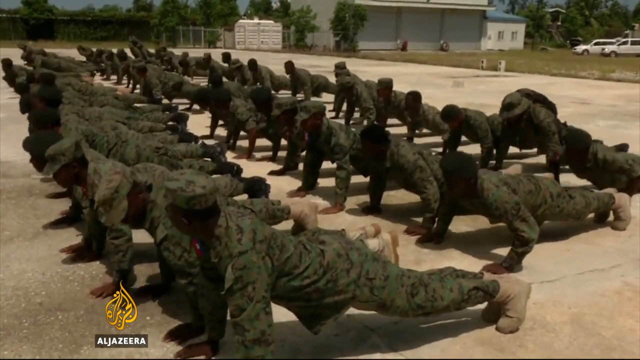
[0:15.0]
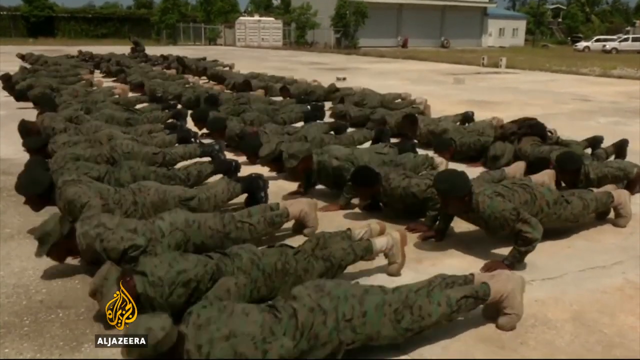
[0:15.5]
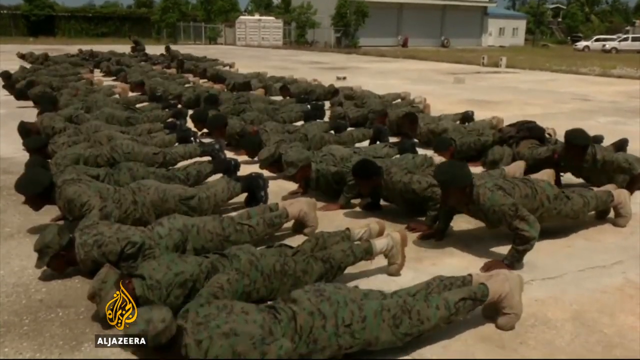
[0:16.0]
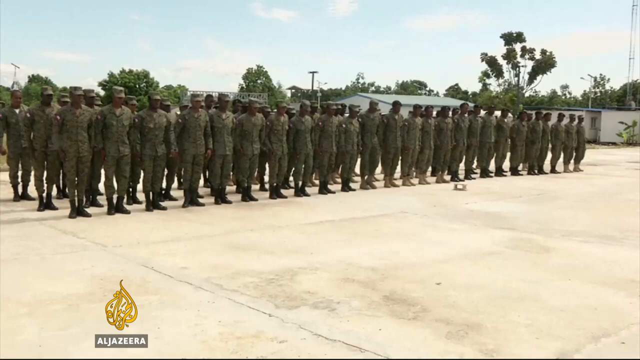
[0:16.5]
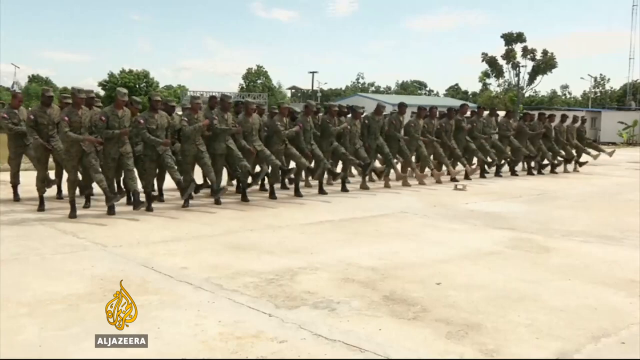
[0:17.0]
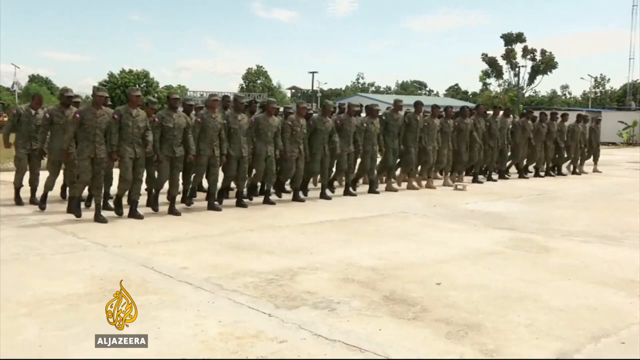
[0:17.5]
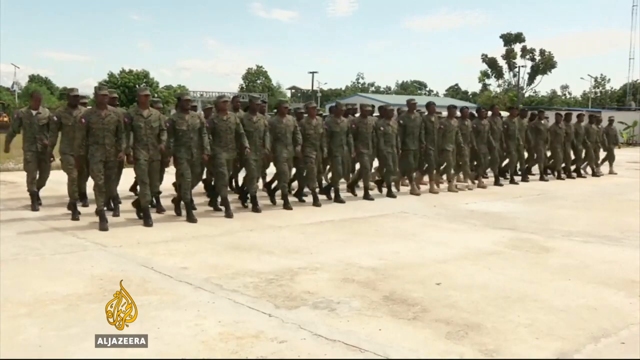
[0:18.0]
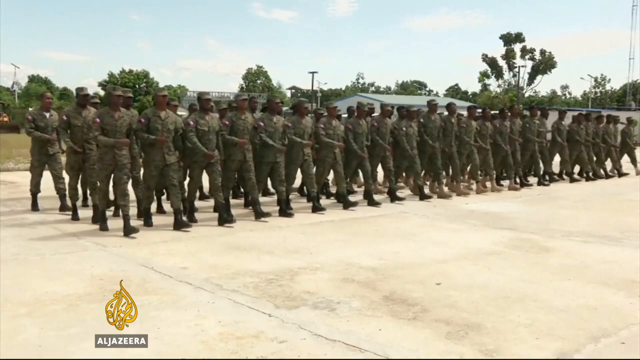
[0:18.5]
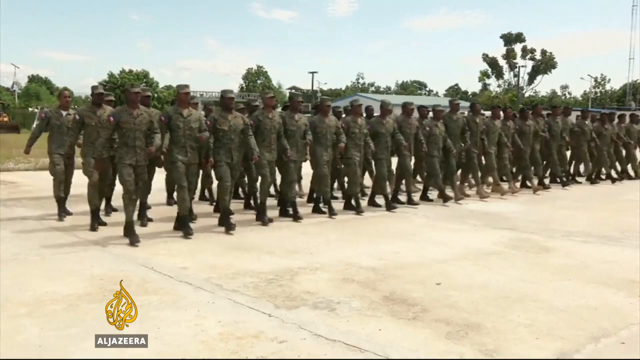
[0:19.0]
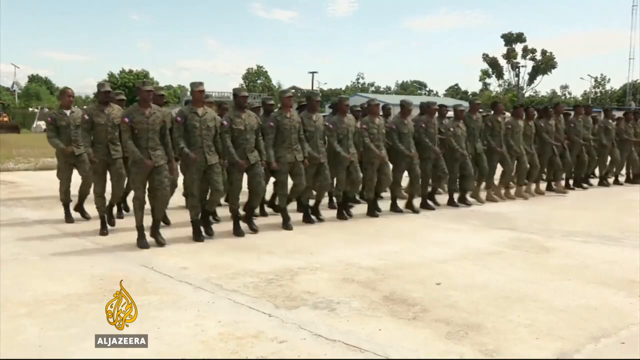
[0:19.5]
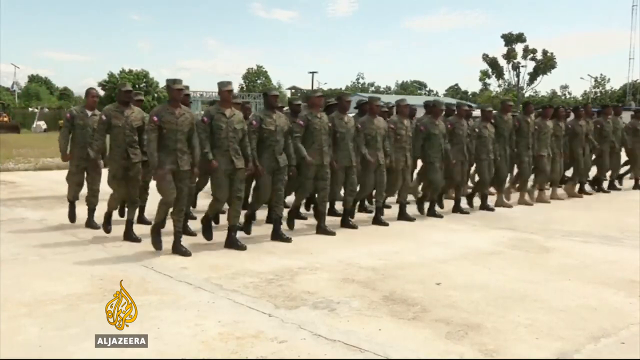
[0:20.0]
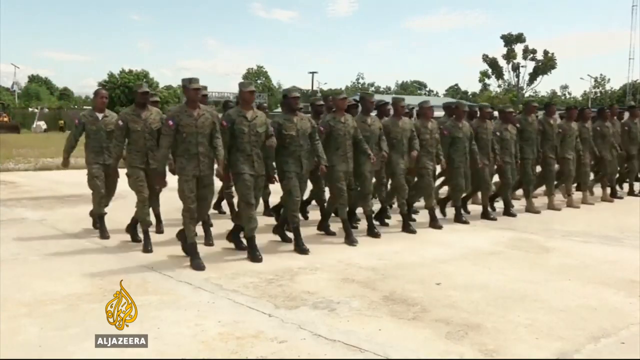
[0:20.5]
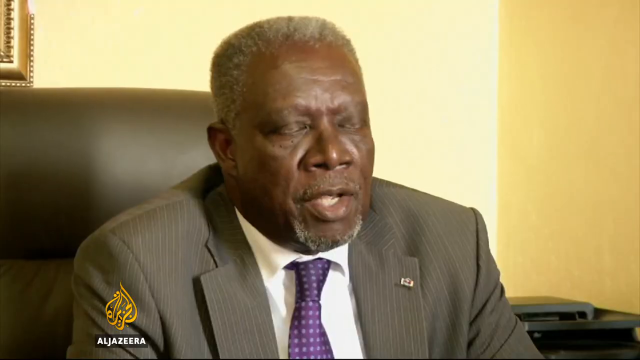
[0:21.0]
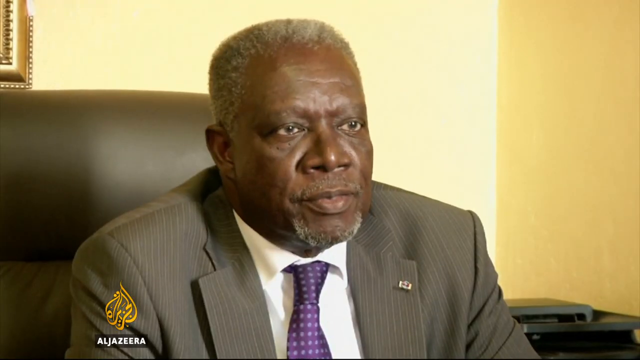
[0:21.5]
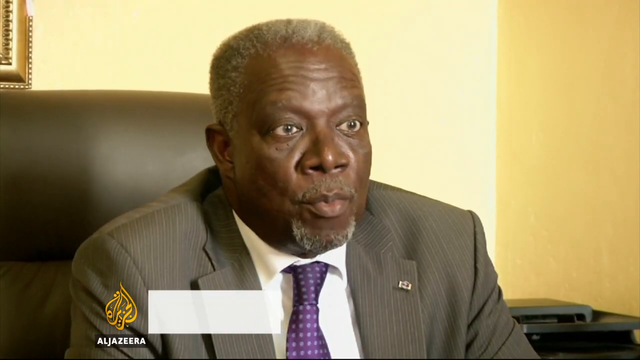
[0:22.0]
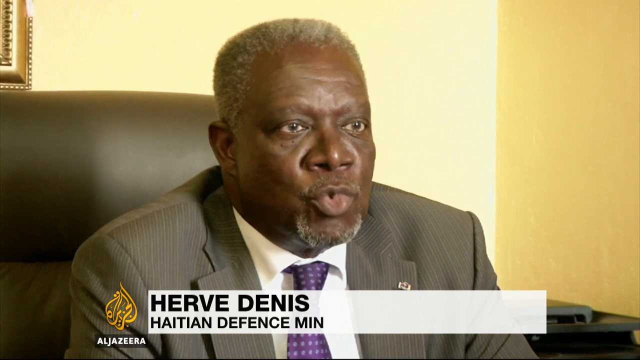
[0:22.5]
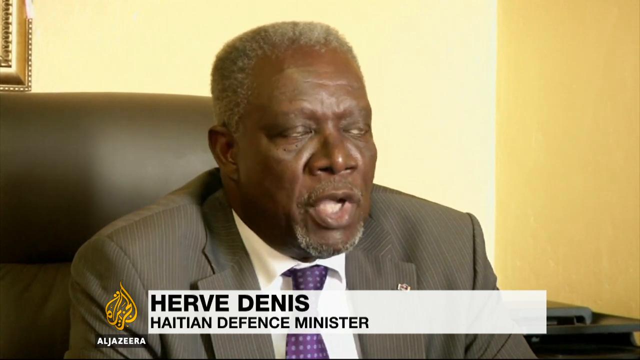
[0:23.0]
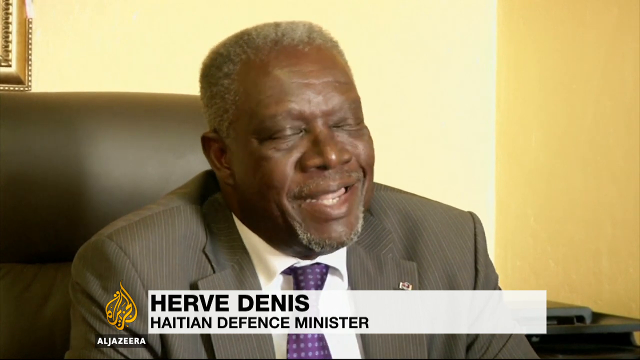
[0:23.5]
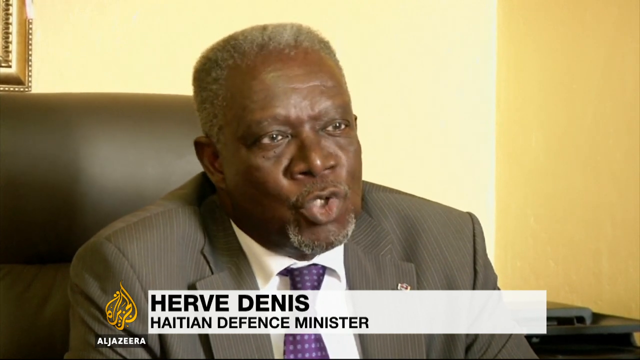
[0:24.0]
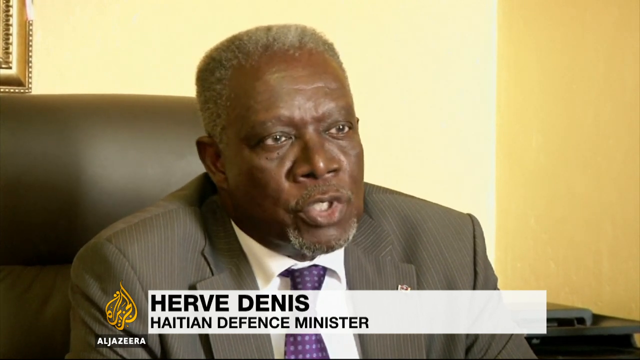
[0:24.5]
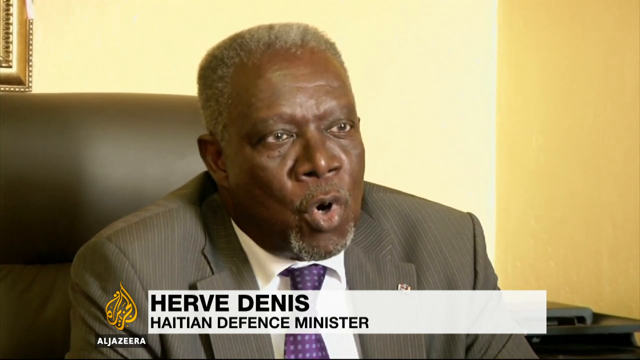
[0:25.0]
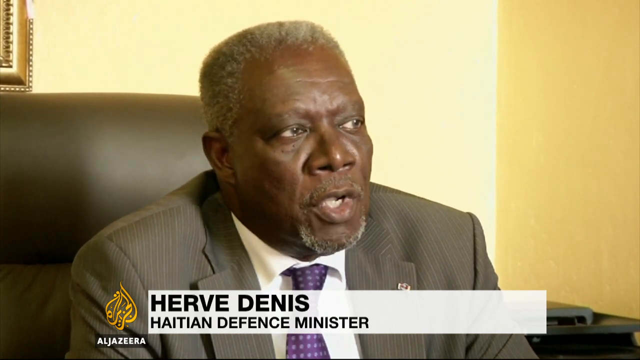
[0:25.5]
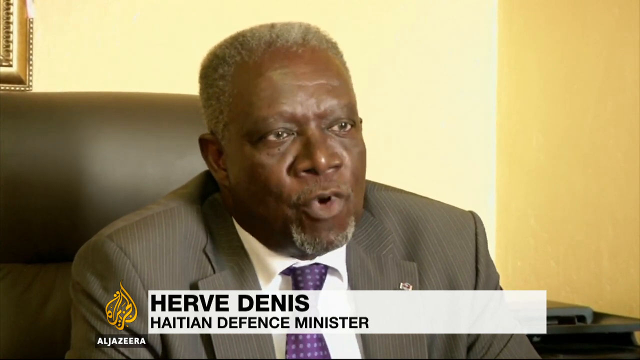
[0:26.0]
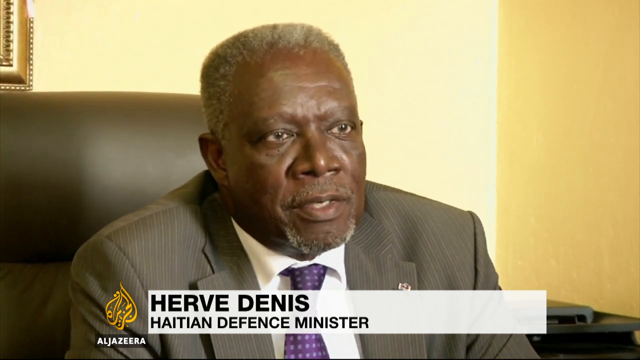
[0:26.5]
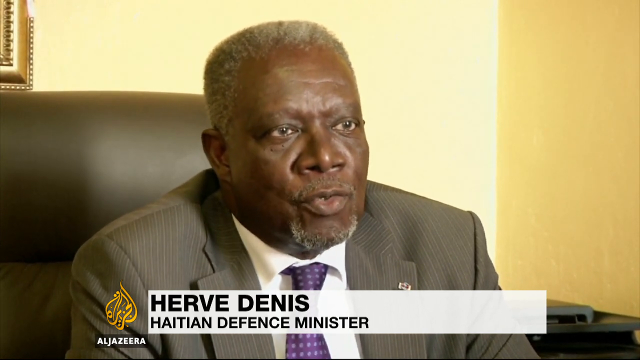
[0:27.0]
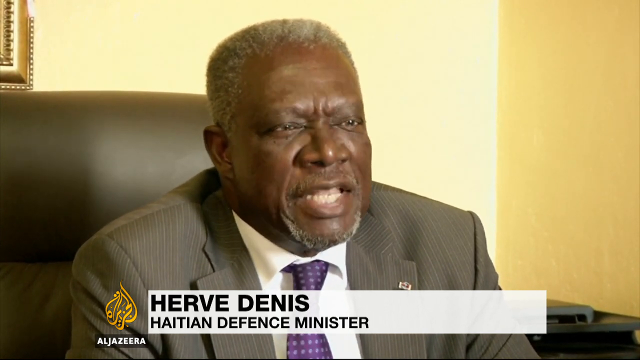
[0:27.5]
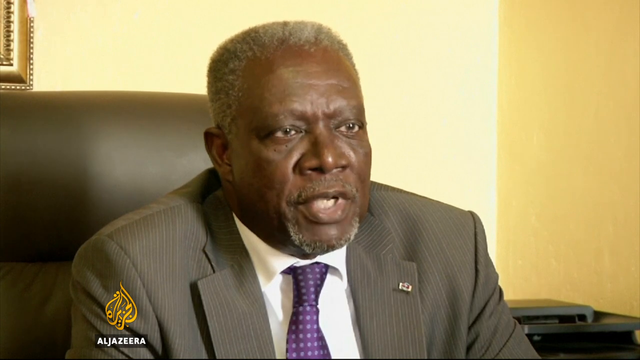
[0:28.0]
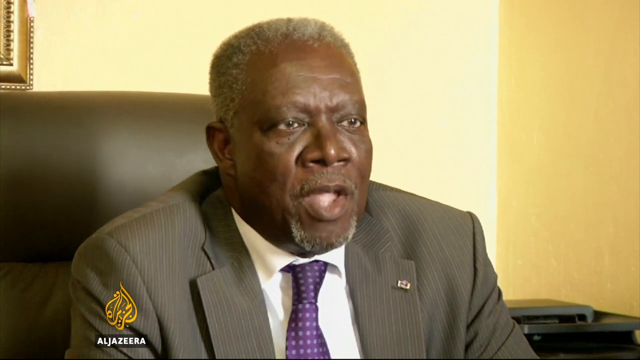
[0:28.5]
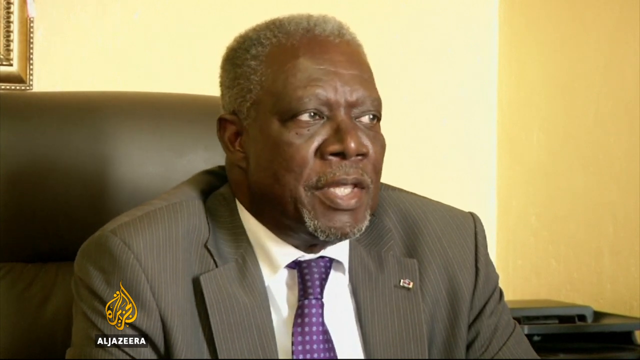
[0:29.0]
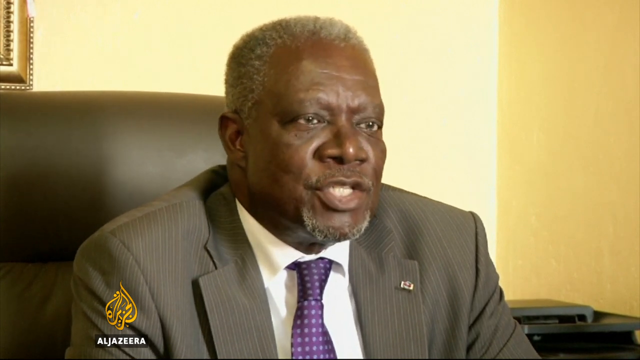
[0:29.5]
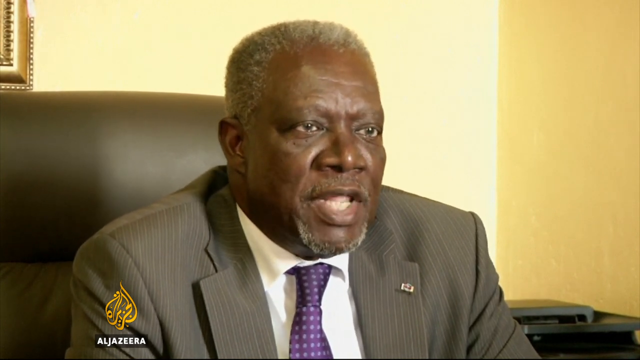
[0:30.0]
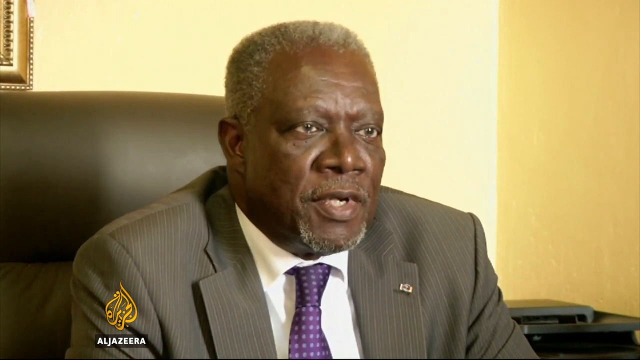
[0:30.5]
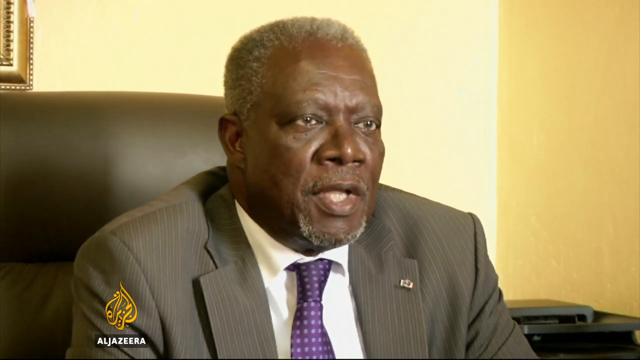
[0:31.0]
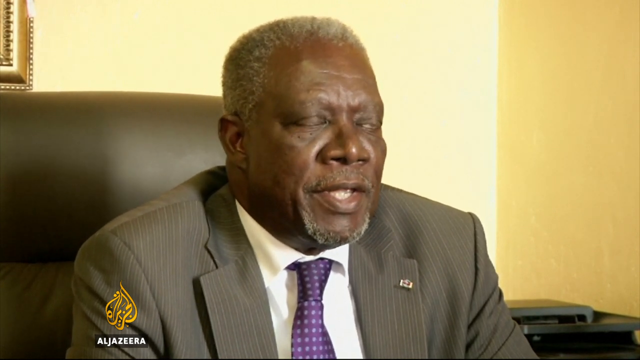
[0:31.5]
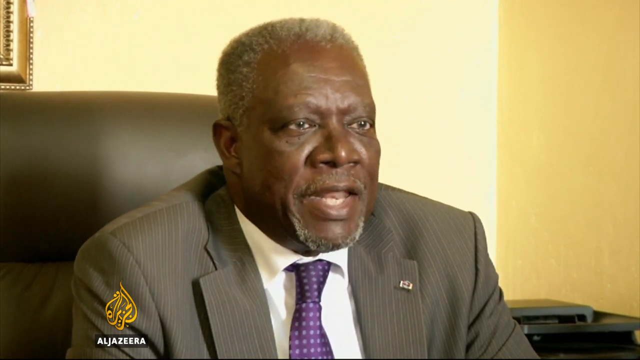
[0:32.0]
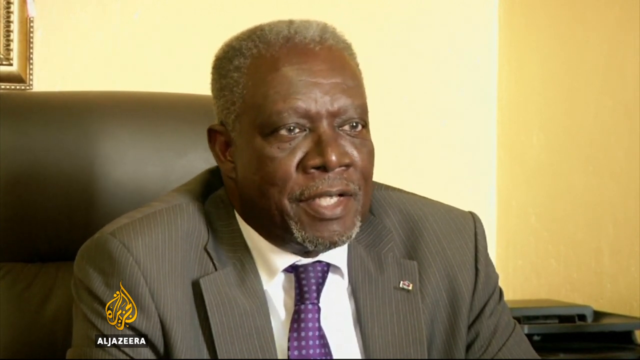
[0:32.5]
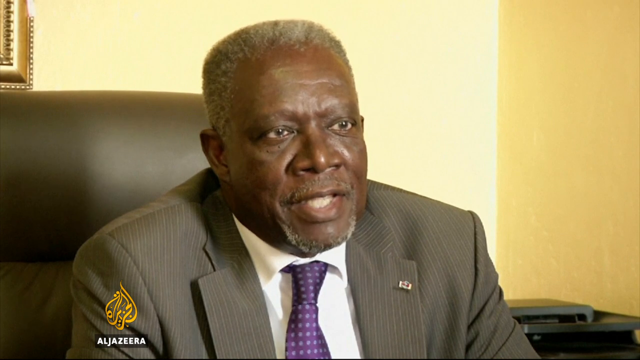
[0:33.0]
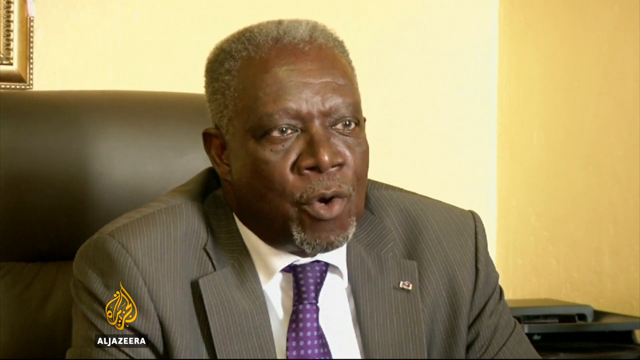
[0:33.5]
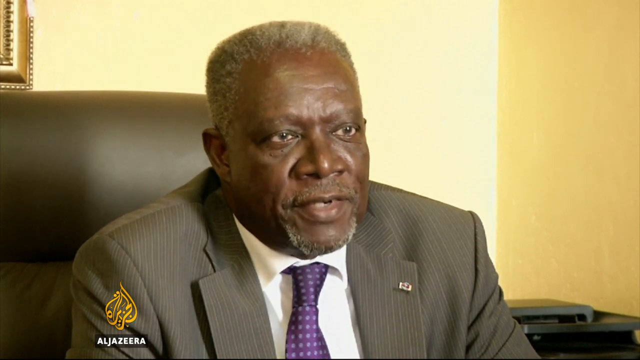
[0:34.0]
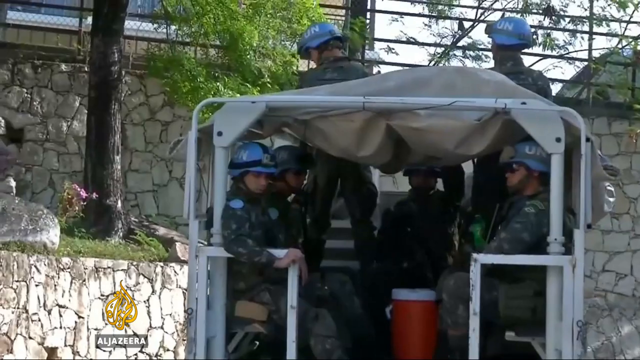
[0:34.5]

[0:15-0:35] The Haitian army is shown doing drills, marching in unison in their army fatigues, and doing push-ups. The defense minister, whose name is Herve Dennis or Denise, is interviewed as he speaks. He is an older gentleman with graying hair, dressed in a suit and tie with a white shirt and some sort of lapel pin; his suit is gray, like a textured pinstripe of some sort. He seems to be talking very seriously. Some of the soldiers are dressed a little differently than the others, with different boots. This appears to be an Al Jazeera video.